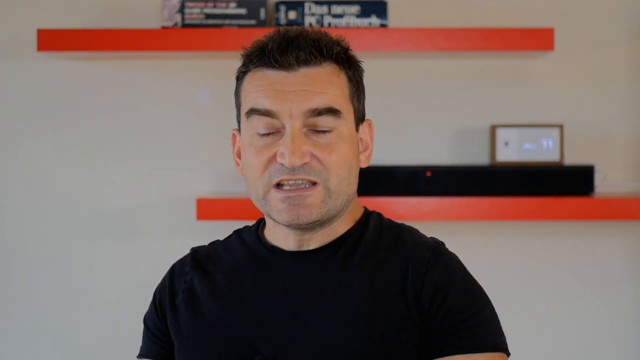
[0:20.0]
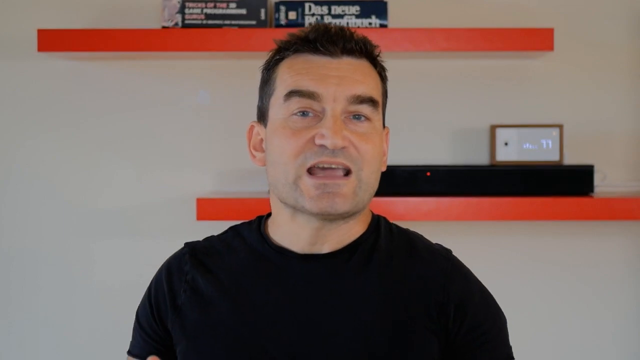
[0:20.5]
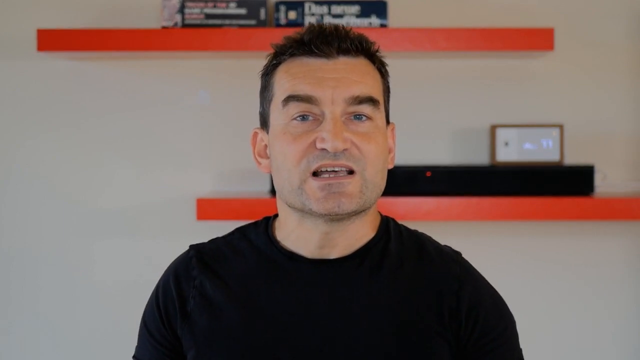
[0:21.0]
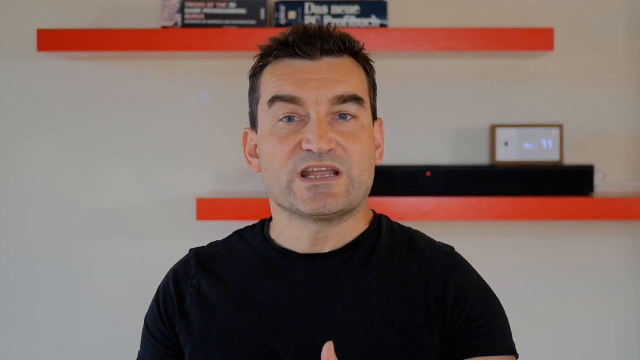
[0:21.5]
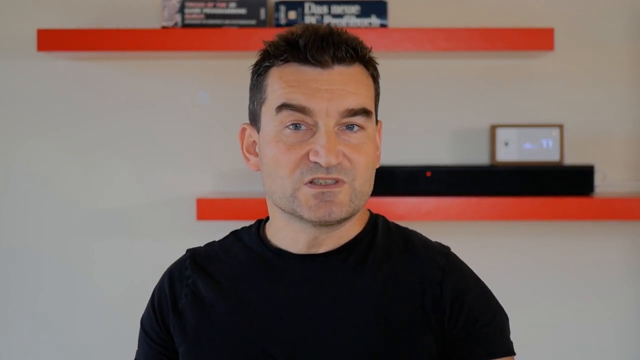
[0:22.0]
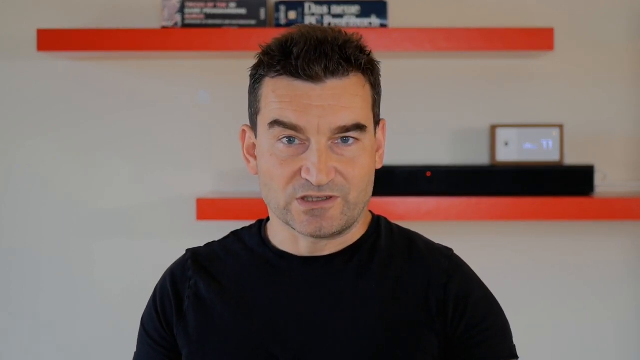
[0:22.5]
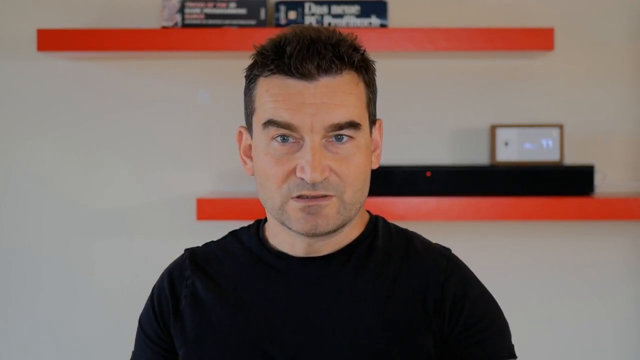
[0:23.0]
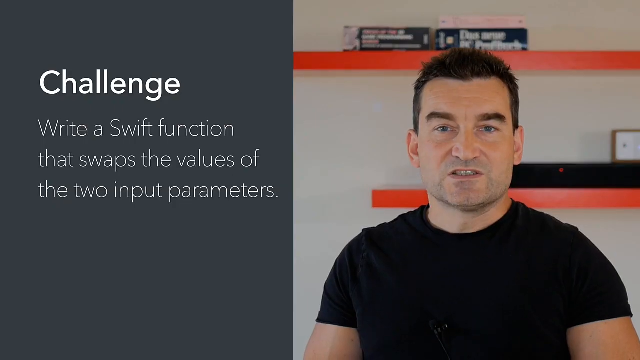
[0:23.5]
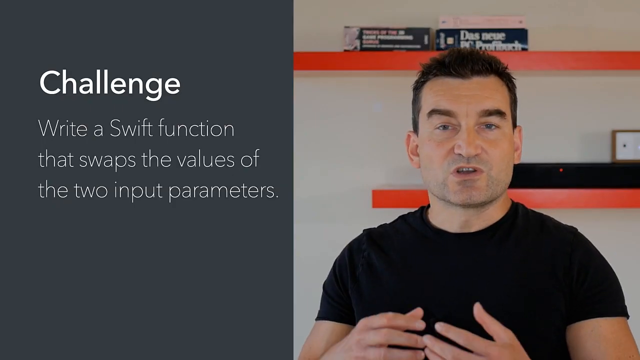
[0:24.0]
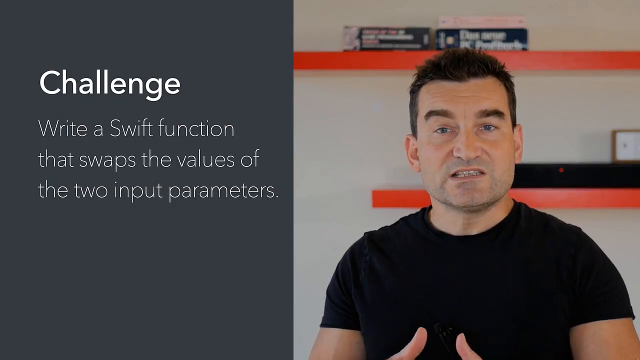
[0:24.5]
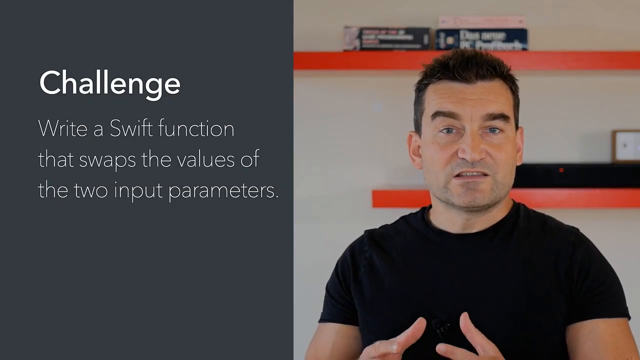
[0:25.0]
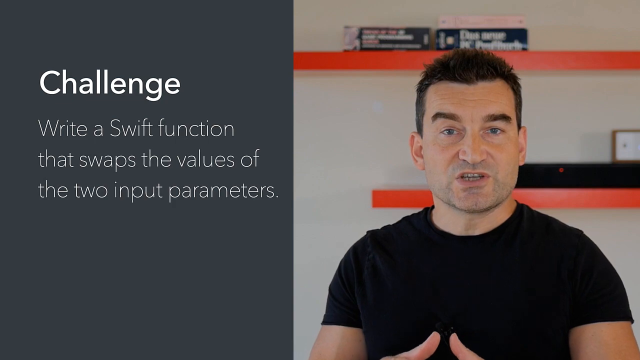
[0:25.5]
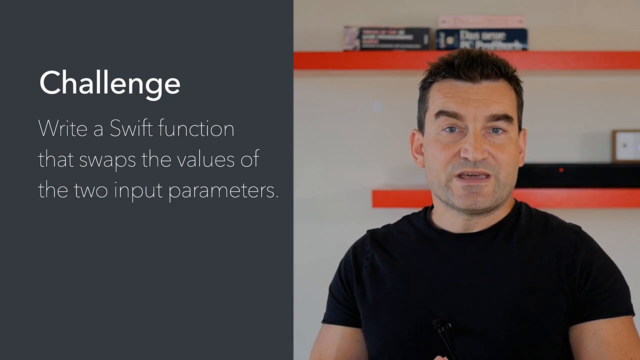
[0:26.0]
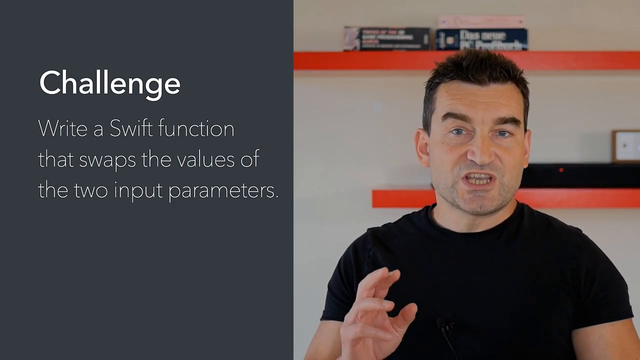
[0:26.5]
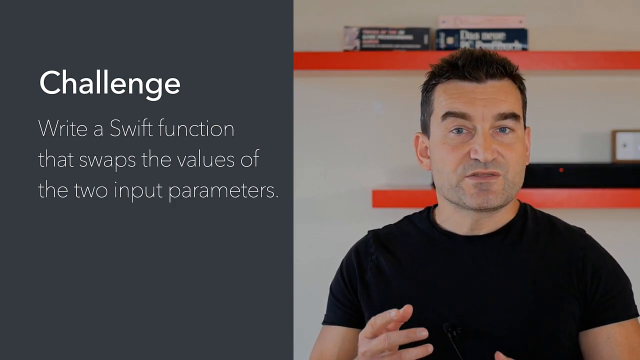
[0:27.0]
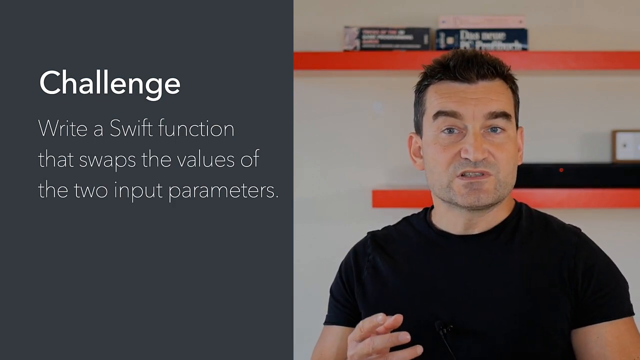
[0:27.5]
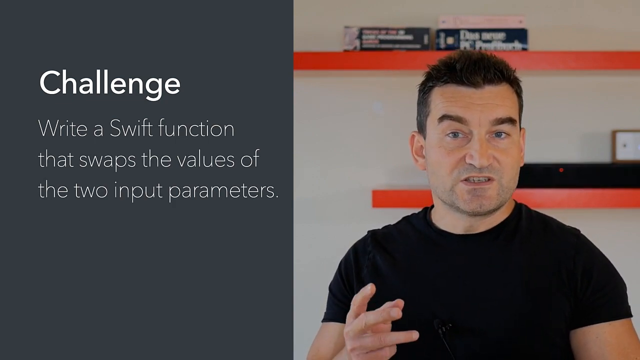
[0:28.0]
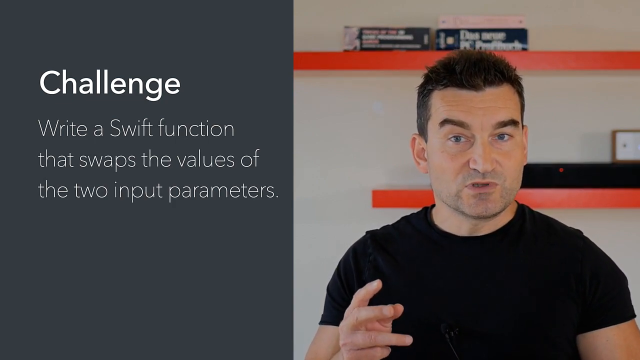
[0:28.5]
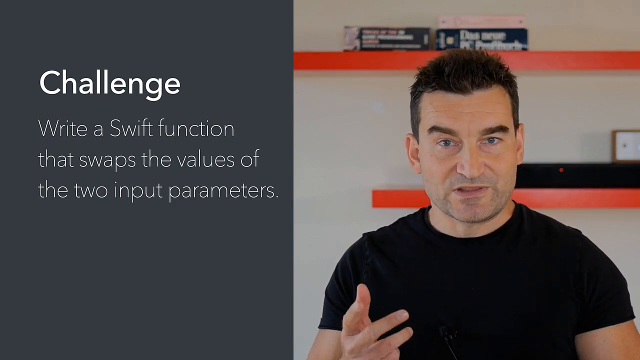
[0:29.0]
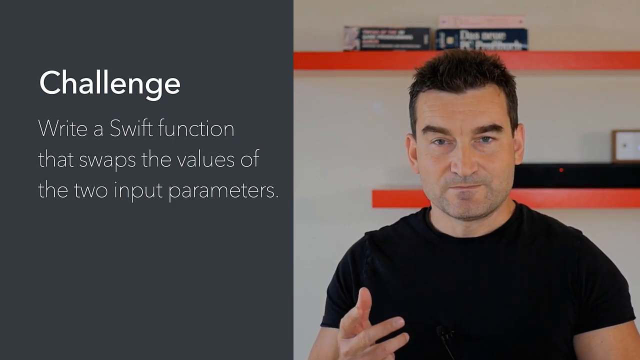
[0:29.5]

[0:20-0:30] The man speaks looking straight into the camera, using his hands as he talks. The screen is split, and on the left side, against a solid gray background, it says "challenge write a swift function that swaps the values of the two input perimeters", with "challenge" written in white and the rest of the sentence in gray. He continues to speak, at one point kind of twisting his right hand as he talks. The orange shelves are behind him, with books on the top shelf and a monitor, and on top of the monitor a clock that looks like it may show the date. A number 11 is visible on the face of that very small box, which is on top of the larger black box.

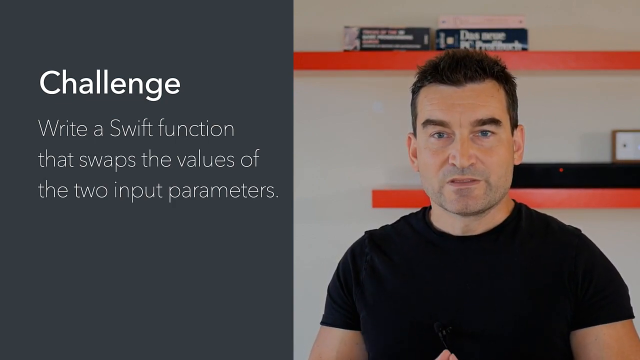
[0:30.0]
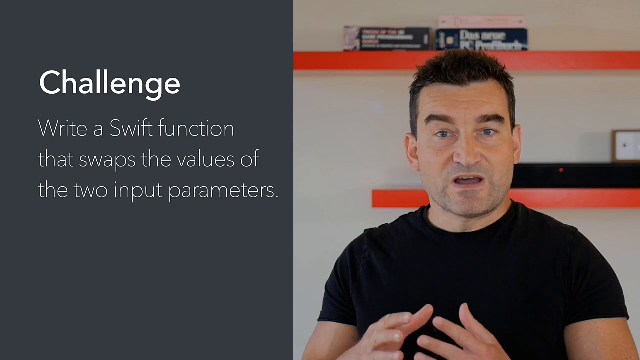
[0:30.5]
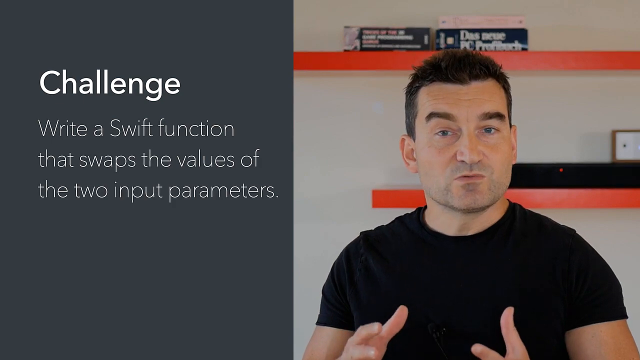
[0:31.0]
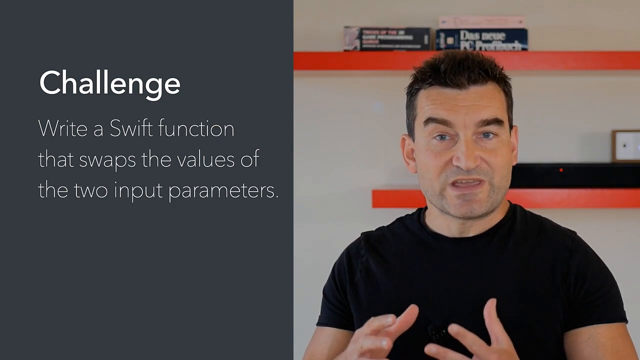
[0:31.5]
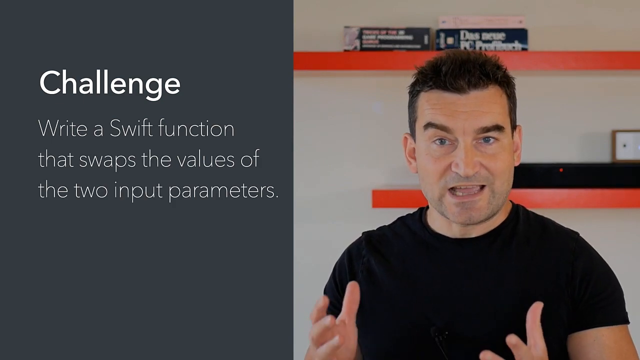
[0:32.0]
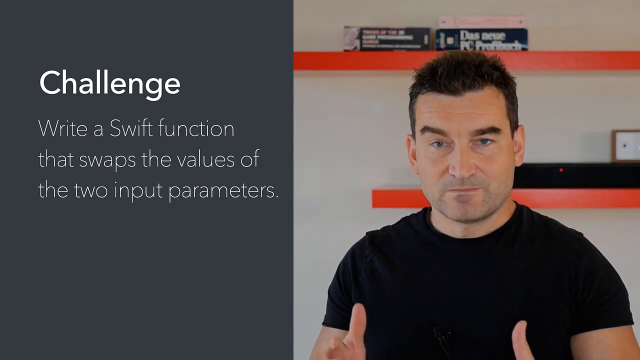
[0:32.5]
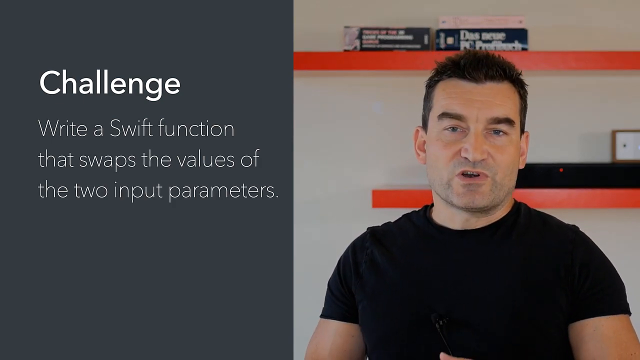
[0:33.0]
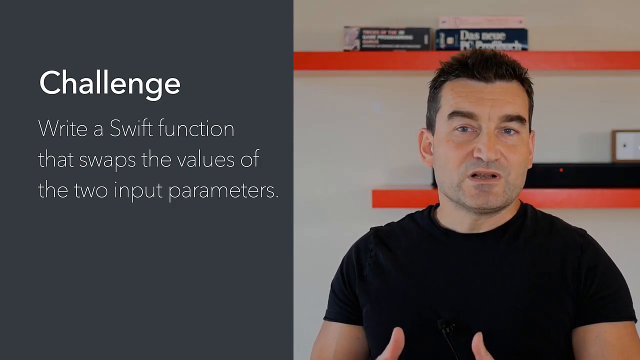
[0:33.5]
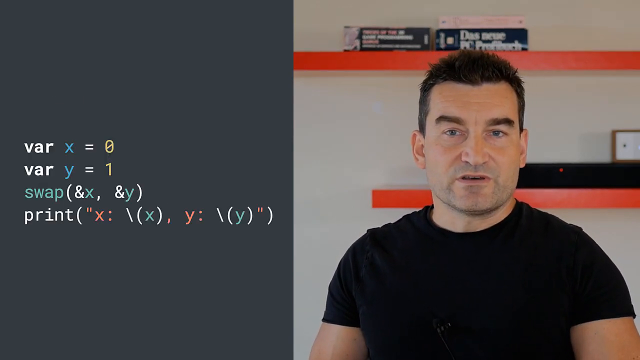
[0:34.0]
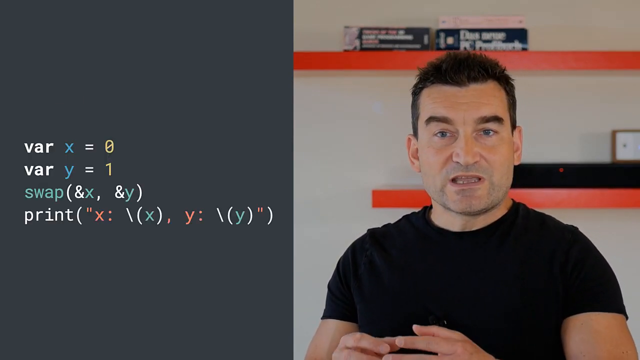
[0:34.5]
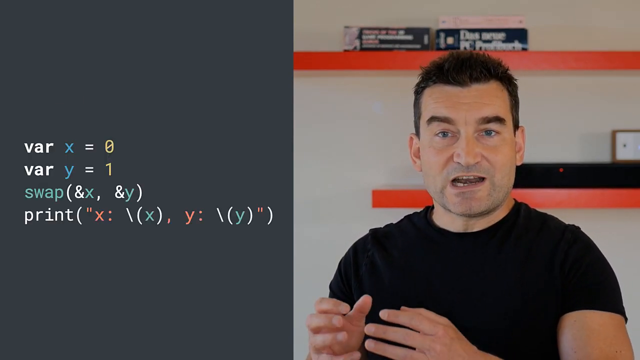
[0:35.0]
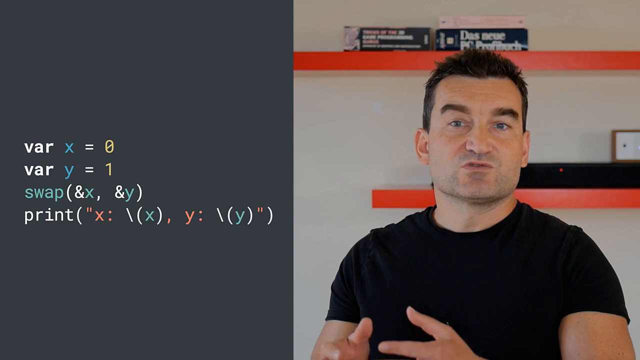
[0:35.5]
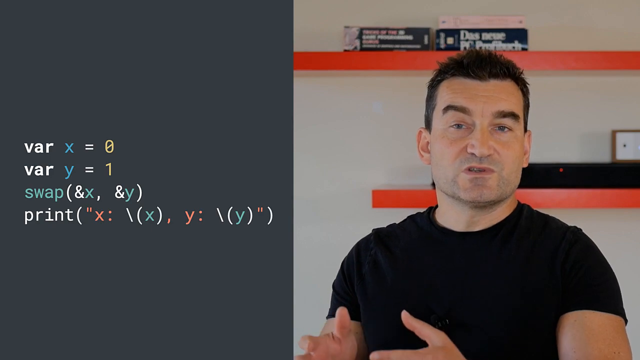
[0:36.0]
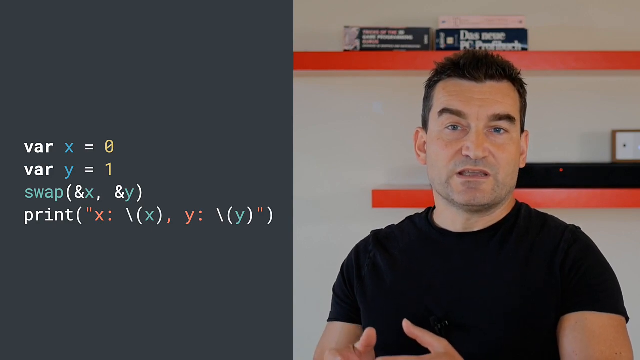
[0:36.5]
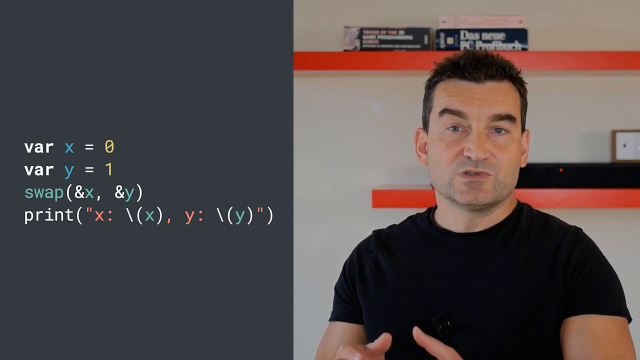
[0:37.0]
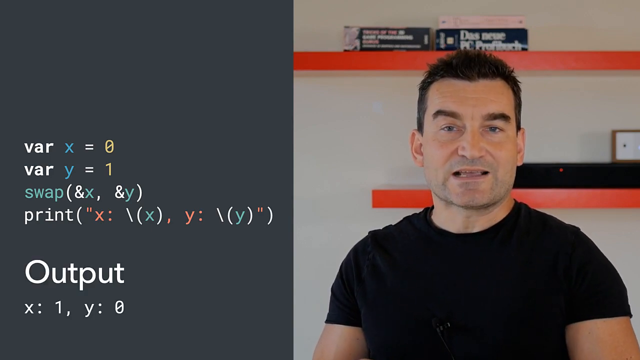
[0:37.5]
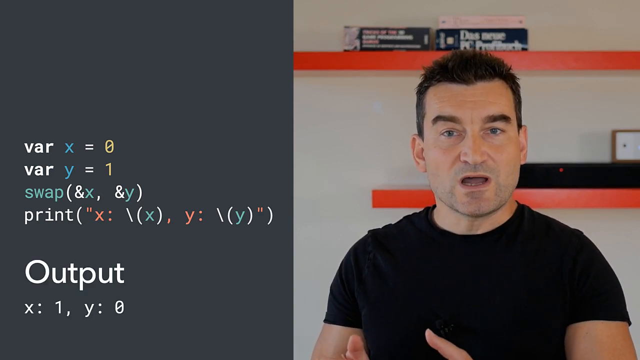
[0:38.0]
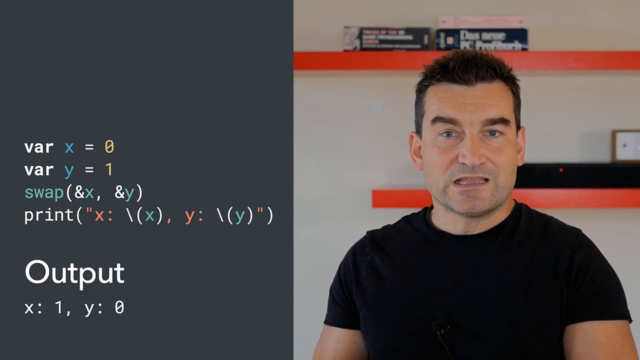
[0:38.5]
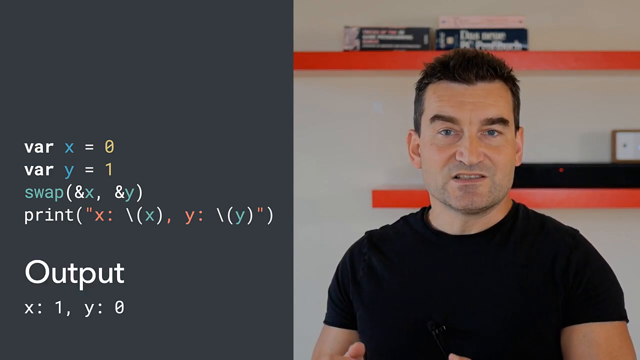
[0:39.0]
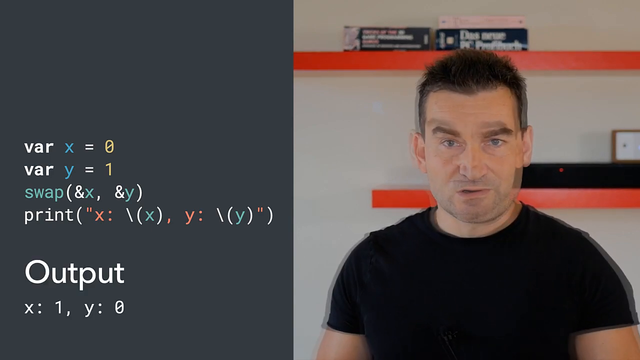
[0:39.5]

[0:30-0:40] On a split screen, a man speaks on the right side. He is a white man with black hair, wearing a black sweater, and he looks like he is in an office or a media room. There are two orange shelves: one has books on it, one has a monitor, and there looks to be a clock on the other. The left side of the split screen has a gray background and says "output", with equations written in the middle of the page. It also says "challenge write a swift function that swaps the values of two input perimeters", with "challenge" in white, the sentence in gray, and the background a darker gray that distinguishes it from the gray writing. Behind the man, who continues to talk, is a gray wall that contrasts with the orange shelving.